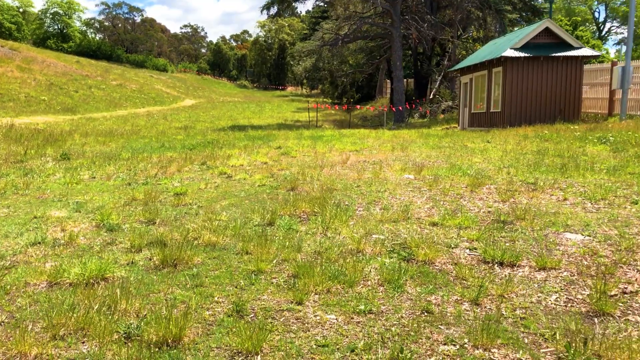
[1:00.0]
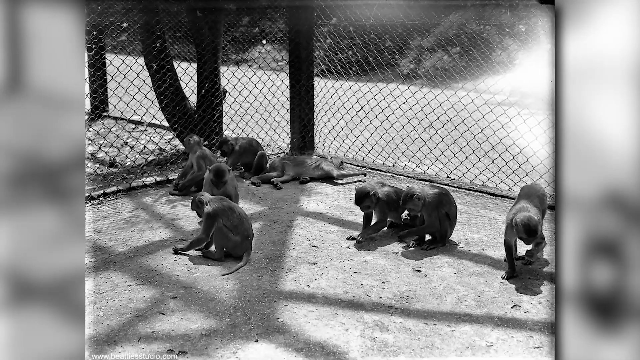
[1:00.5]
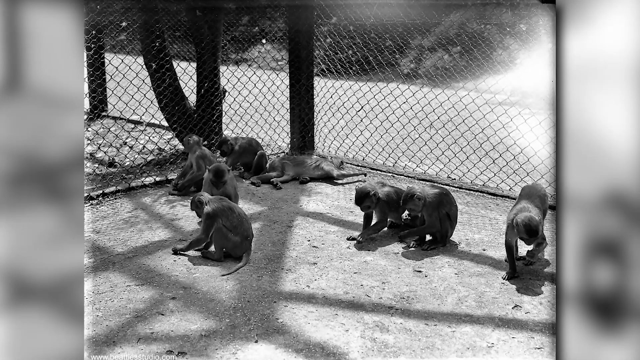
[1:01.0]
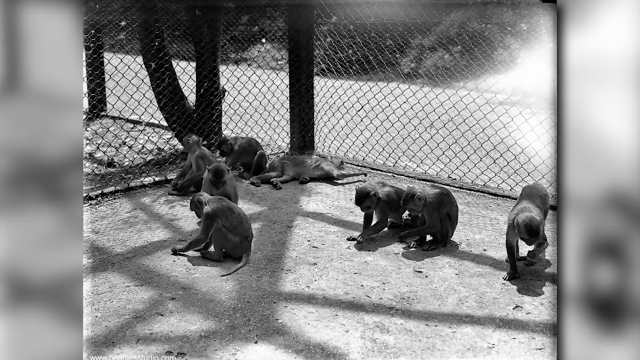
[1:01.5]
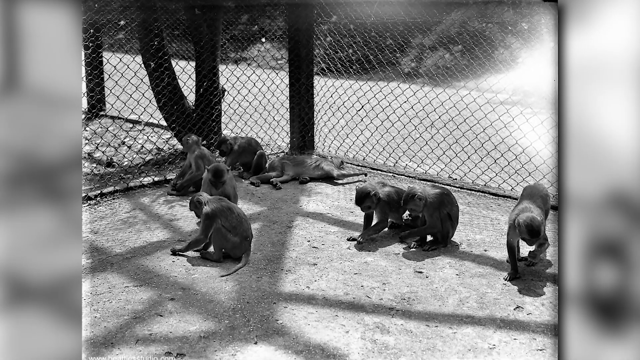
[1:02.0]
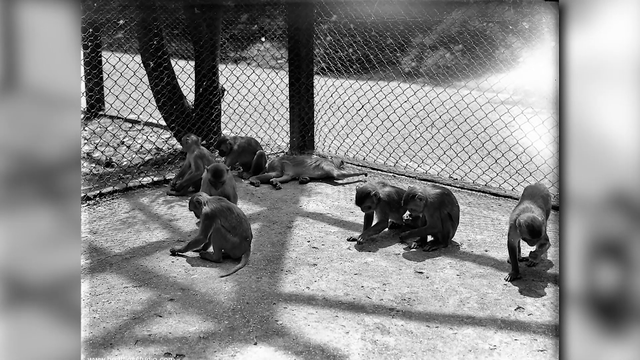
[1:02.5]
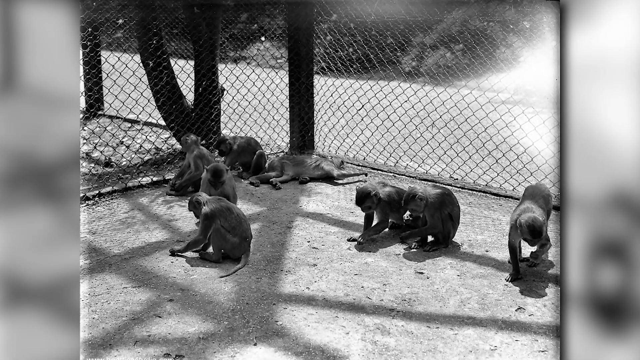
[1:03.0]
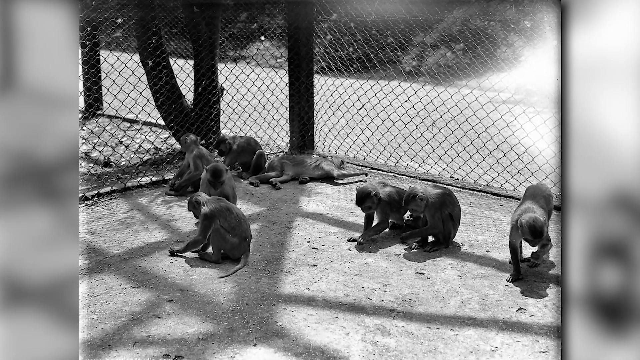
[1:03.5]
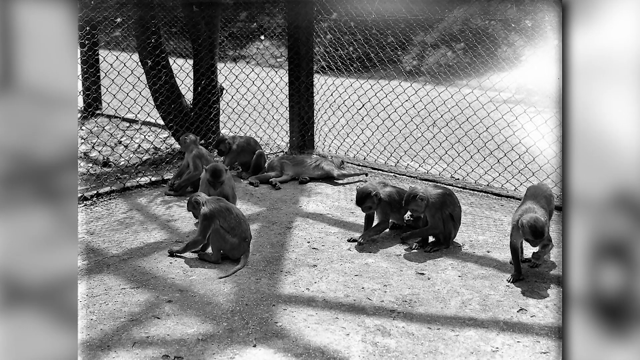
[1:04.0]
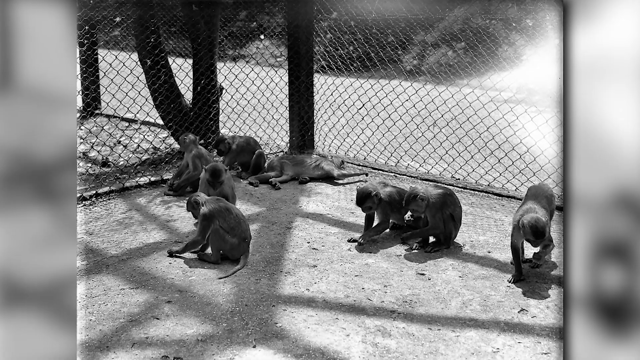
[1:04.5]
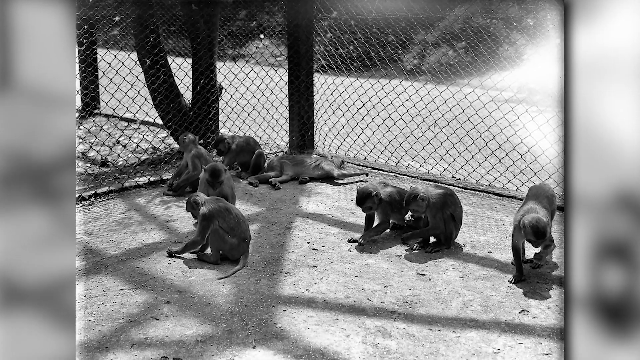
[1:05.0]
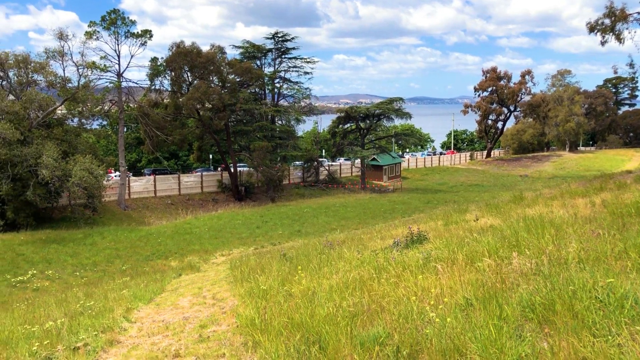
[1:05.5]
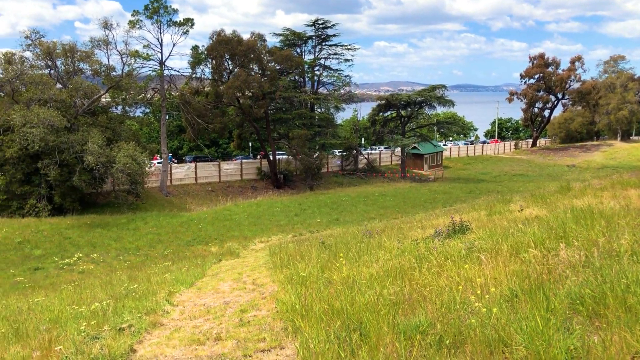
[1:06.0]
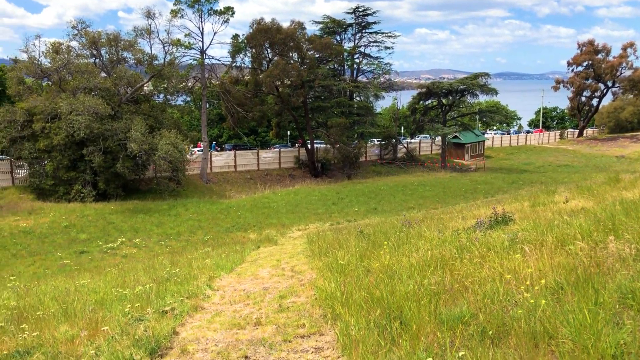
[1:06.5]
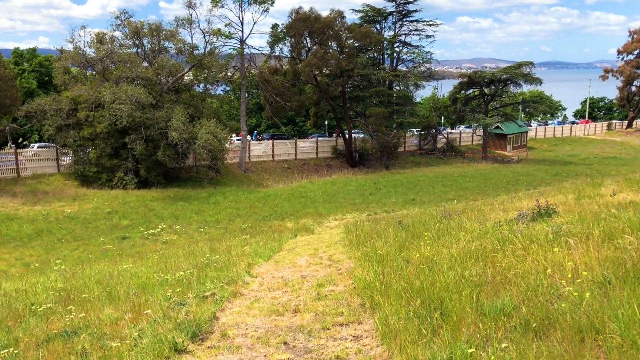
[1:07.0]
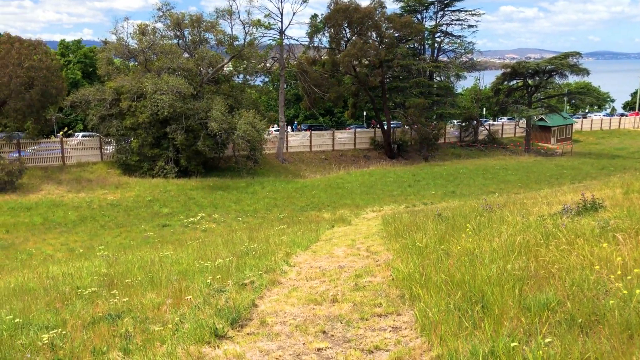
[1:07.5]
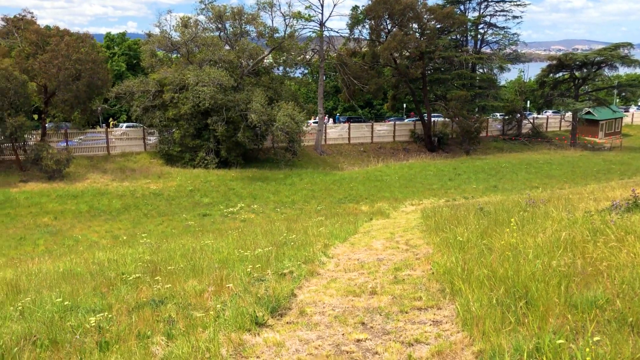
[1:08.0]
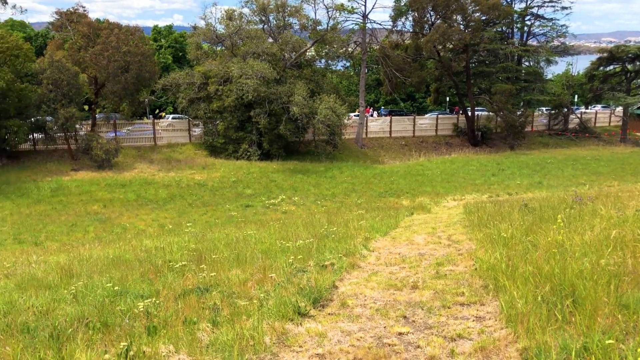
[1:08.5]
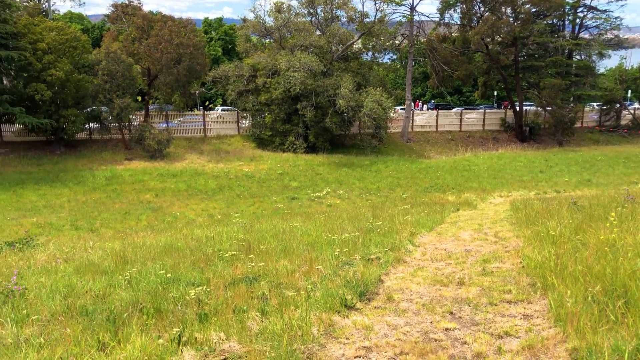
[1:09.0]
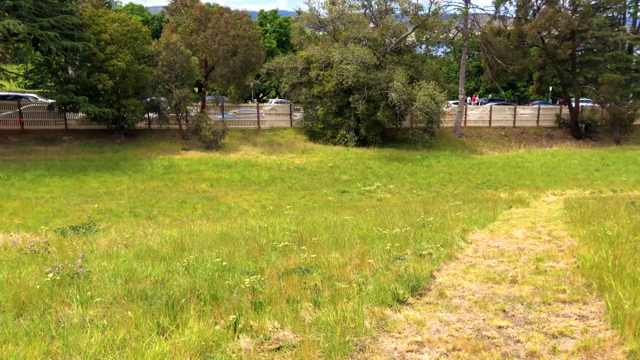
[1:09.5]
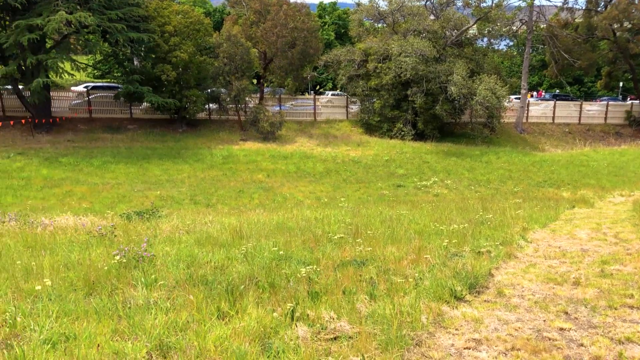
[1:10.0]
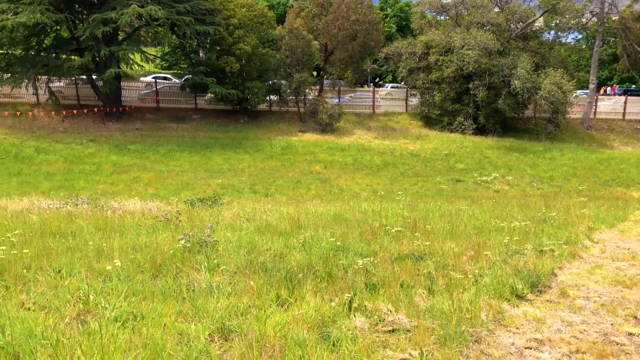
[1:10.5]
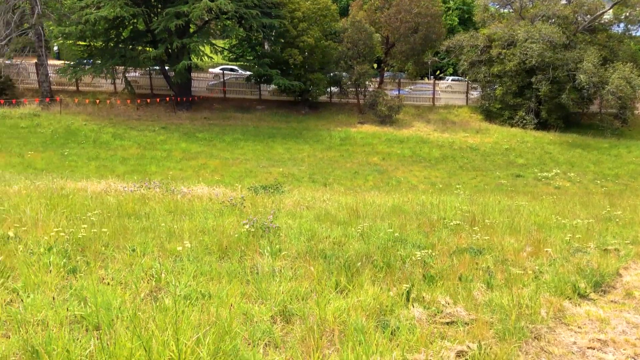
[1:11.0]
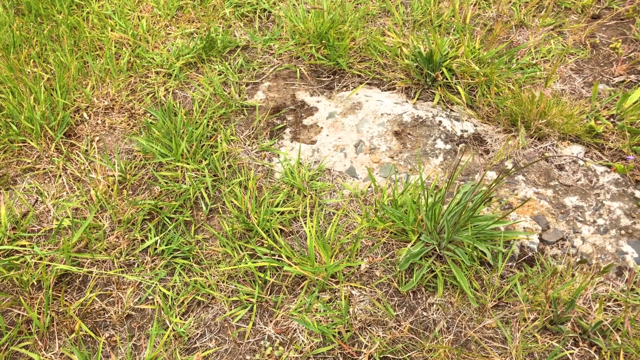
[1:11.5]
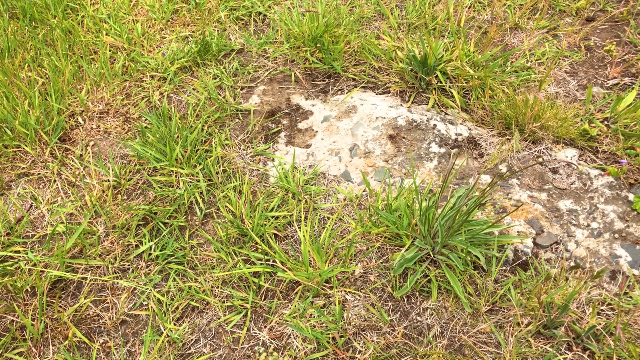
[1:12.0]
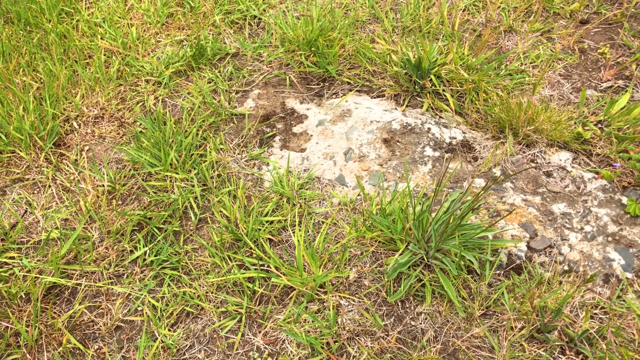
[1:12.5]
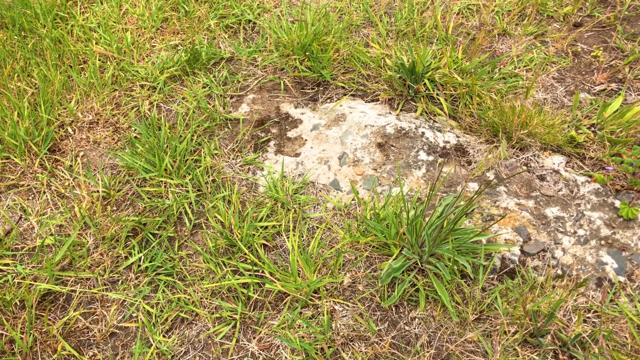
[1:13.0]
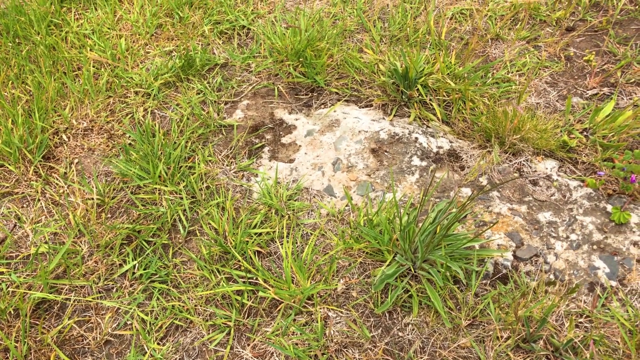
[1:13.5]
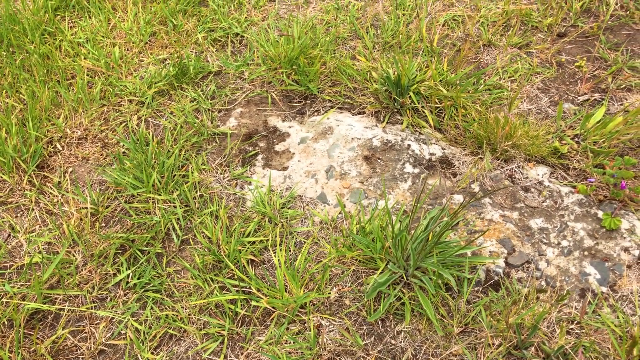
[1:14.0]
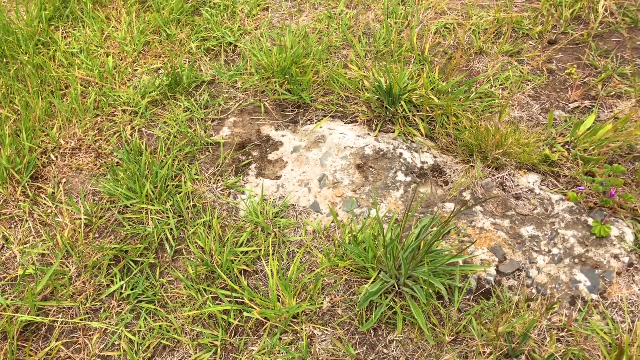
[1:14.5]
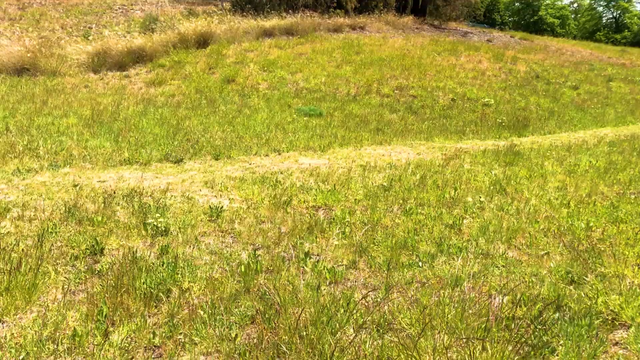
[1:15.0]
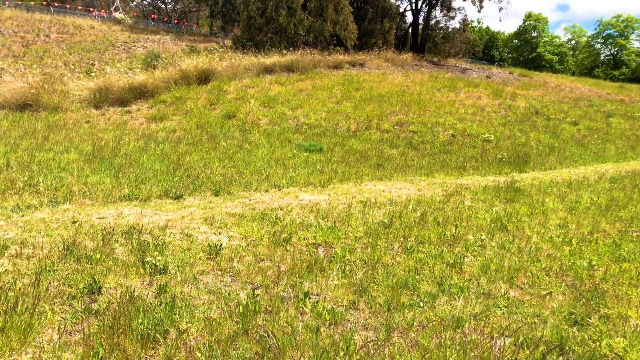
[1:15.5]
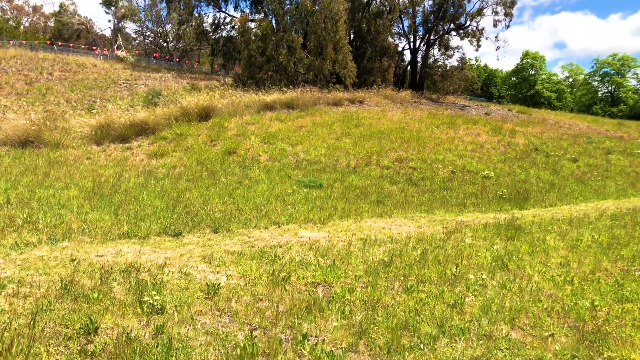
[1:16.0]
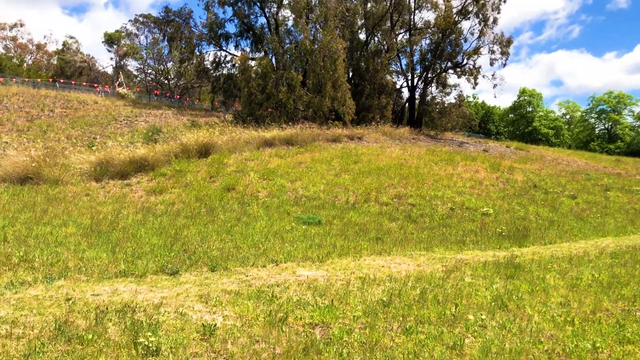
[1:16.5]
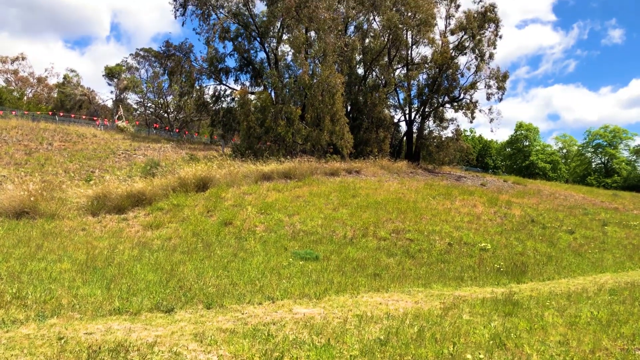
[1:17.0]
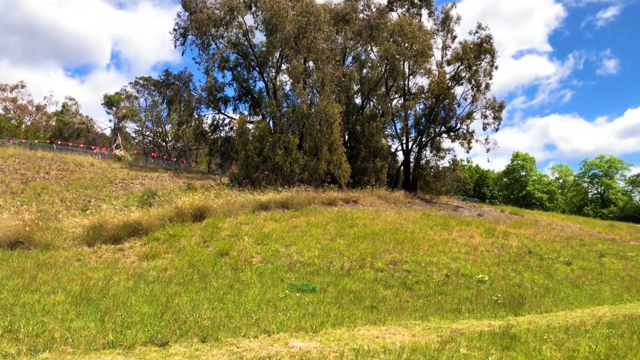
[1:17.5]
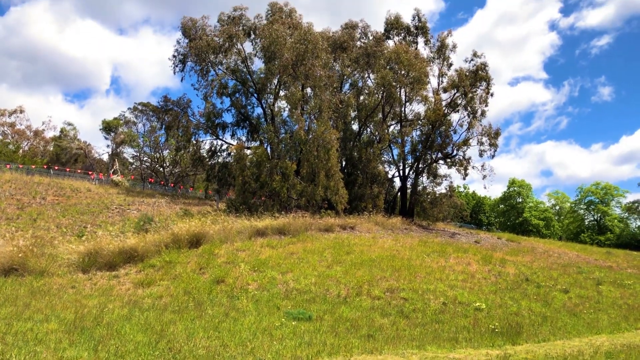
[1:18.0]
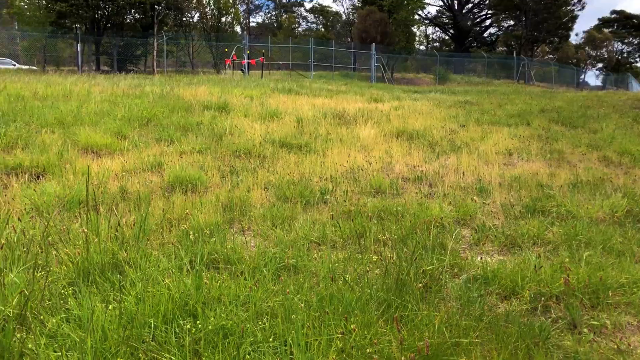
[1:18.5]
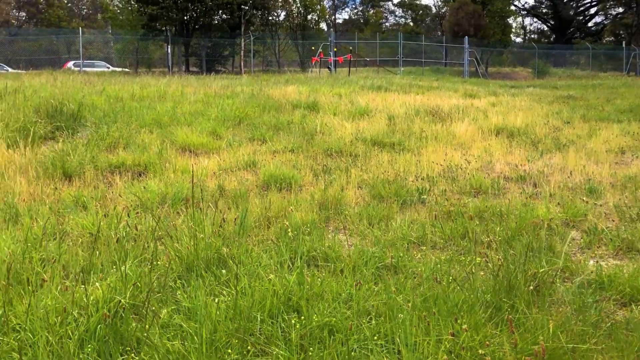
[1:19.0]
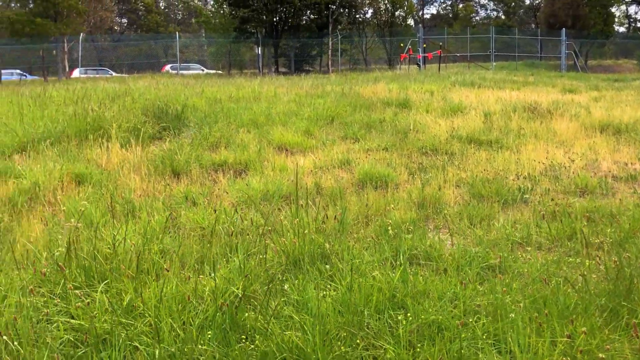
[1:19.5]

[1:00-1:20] A black and white still photo shows a group of monkeys in a cage, with the chain-link fence in the upper area and the monkeys on the ground in the lower area. There are eight monkeys in total: one is lying down in the corner, four are on the left side and three are on the right side. Beyond the fence there looks like some sort of sidewalk or road. The scene changes to a grassy field with a car parked in the distance. A fence runs along the edge of the field, with parked cars beyond it and trees on the edge of the field near the fence, and a car drives along a road. The camera turns to the left and keeps turning, then shows a zoomed-in view of the ground: grass, some sort of white stone, and a white-brown patch of dirt in the middle of the grass. A different view shows green grass as the camera moves upward to a very large cluster of trees. The view changes again to another area of the grass field as the camera moves to the left.